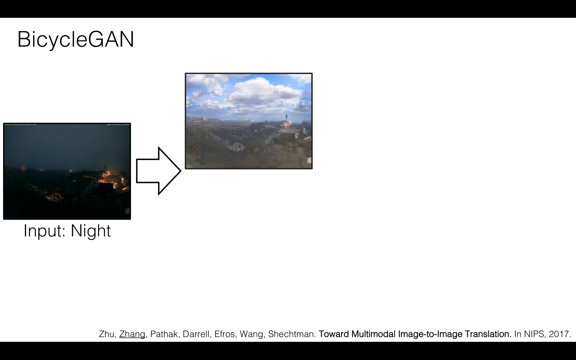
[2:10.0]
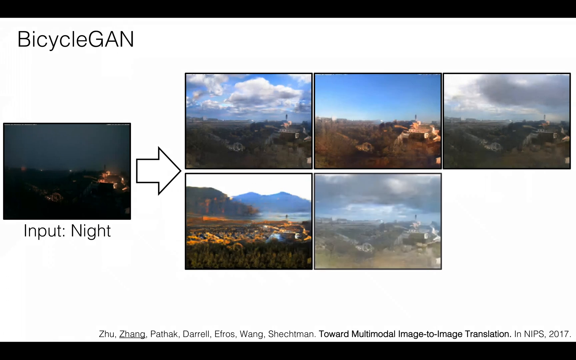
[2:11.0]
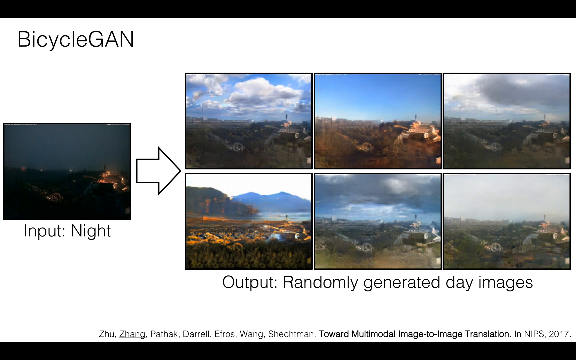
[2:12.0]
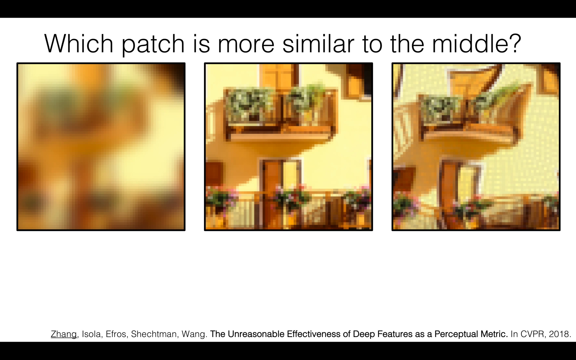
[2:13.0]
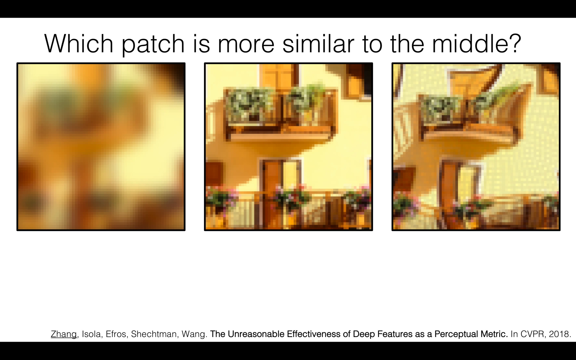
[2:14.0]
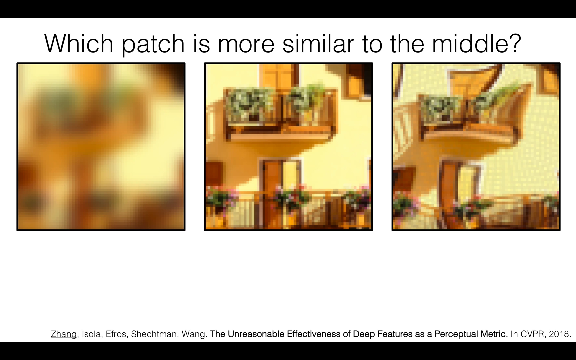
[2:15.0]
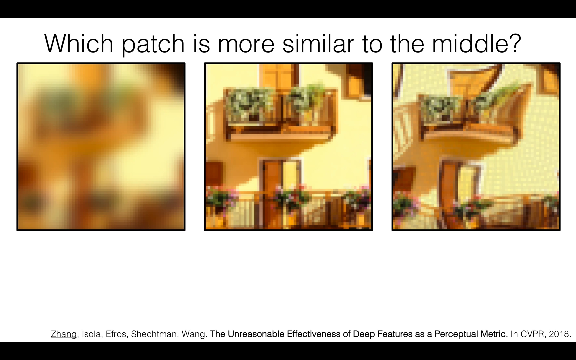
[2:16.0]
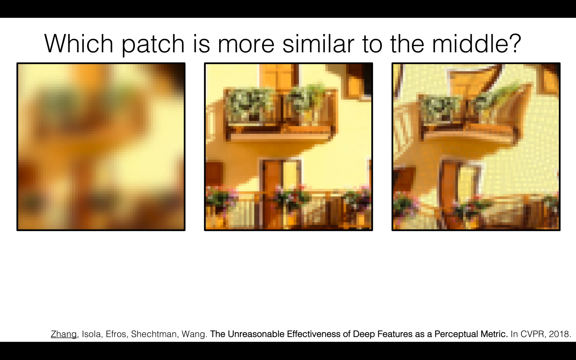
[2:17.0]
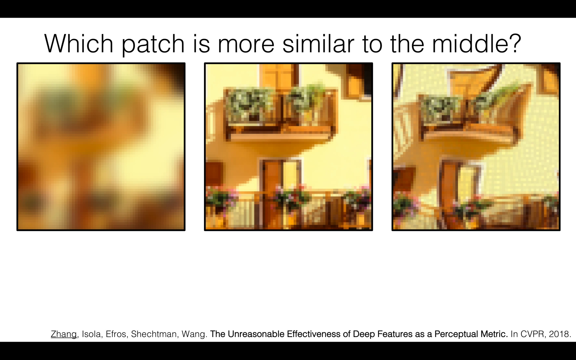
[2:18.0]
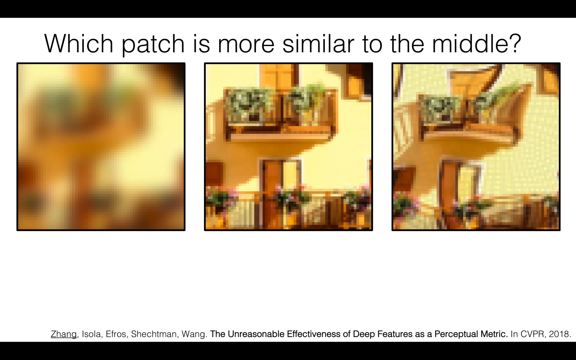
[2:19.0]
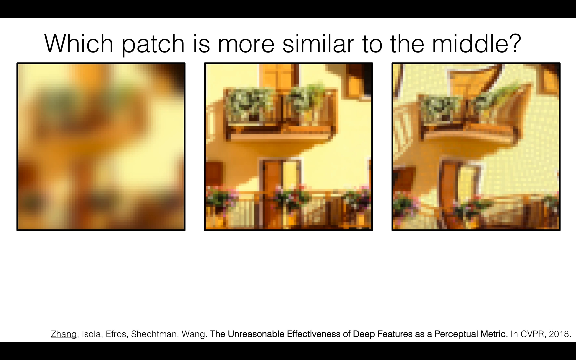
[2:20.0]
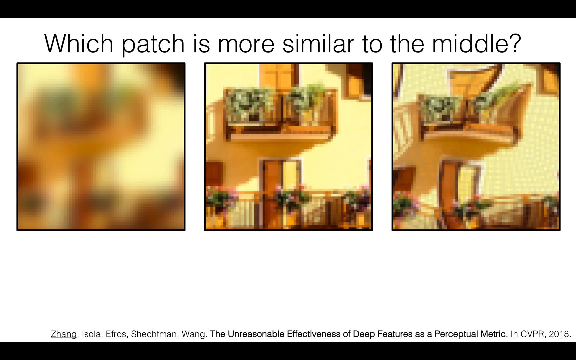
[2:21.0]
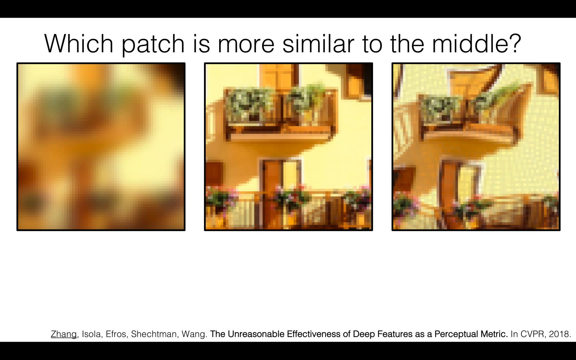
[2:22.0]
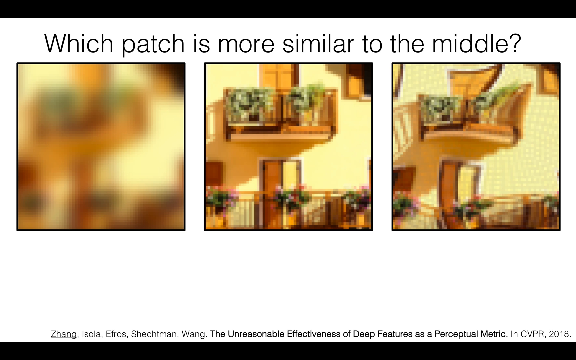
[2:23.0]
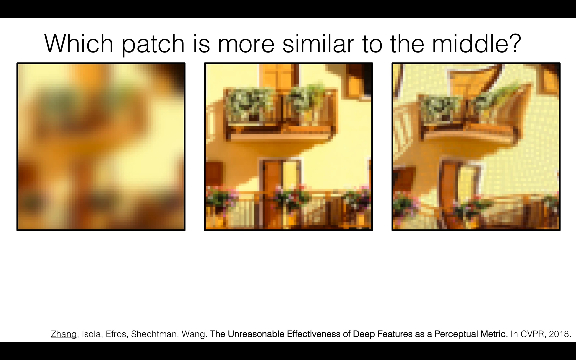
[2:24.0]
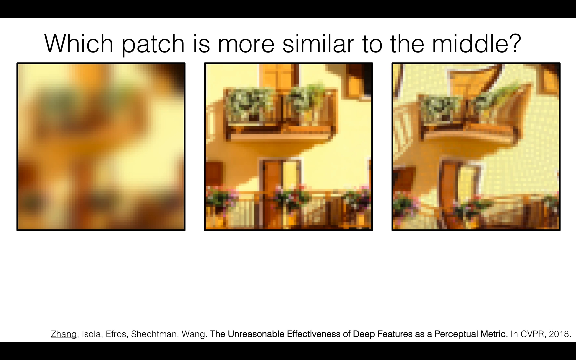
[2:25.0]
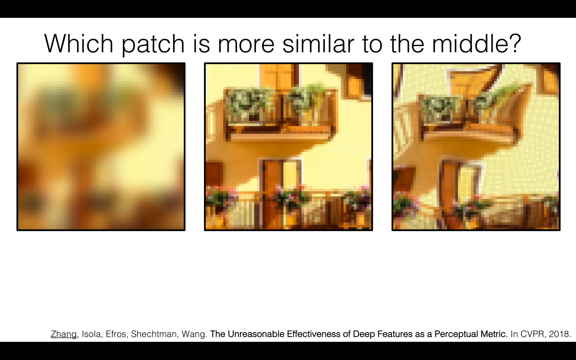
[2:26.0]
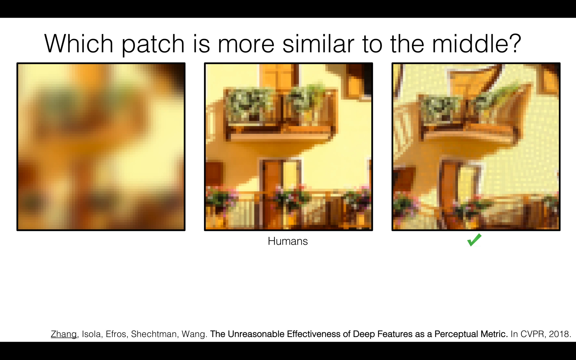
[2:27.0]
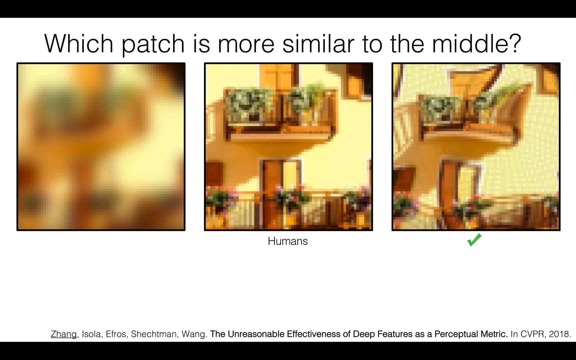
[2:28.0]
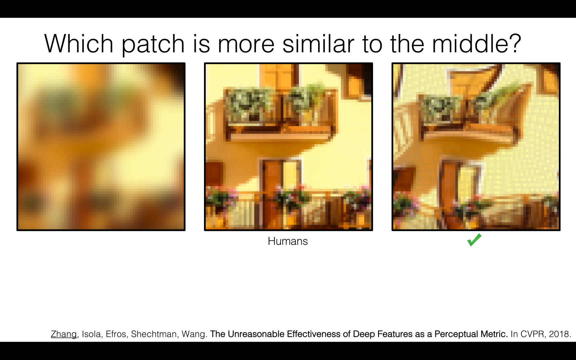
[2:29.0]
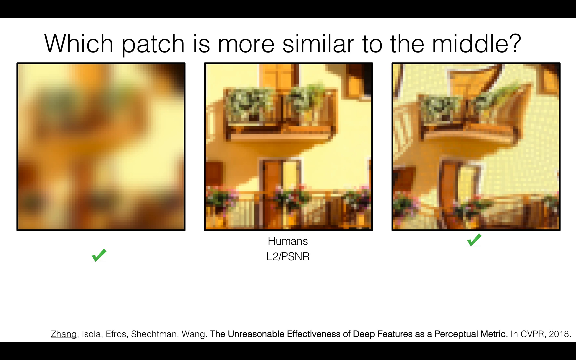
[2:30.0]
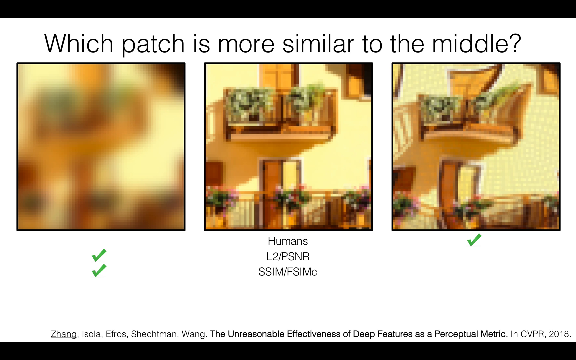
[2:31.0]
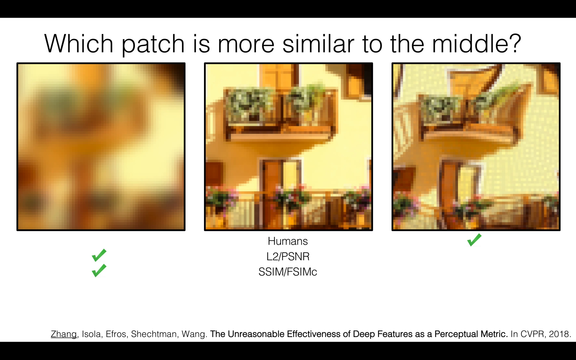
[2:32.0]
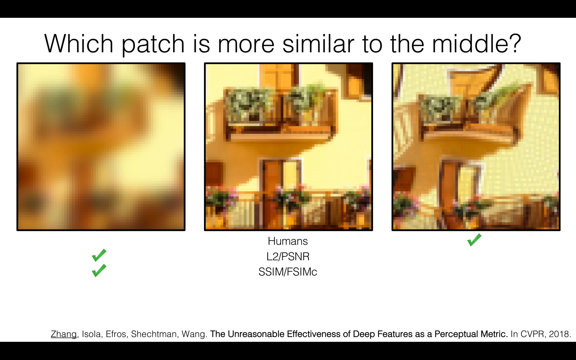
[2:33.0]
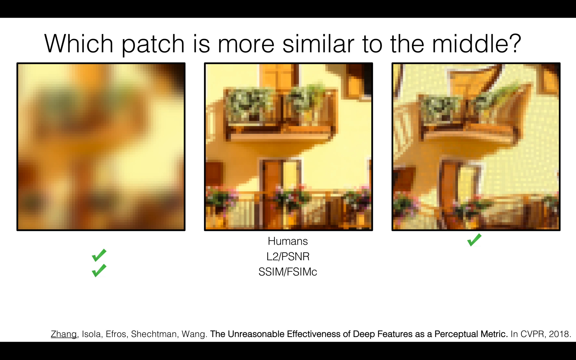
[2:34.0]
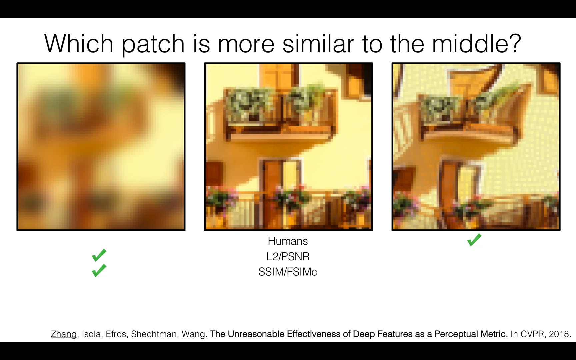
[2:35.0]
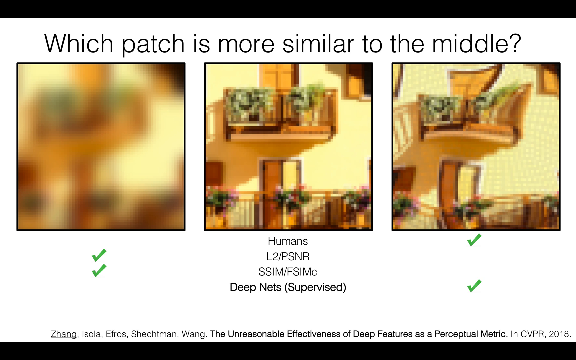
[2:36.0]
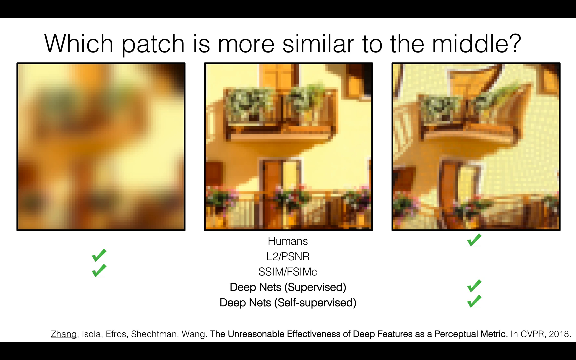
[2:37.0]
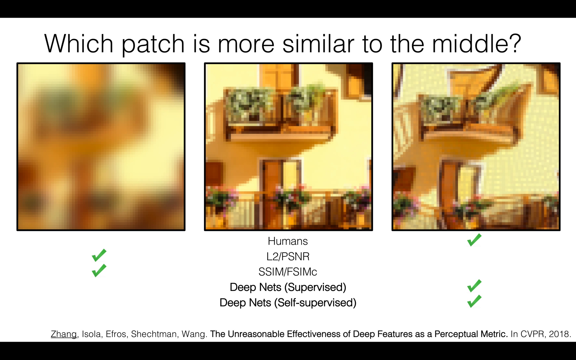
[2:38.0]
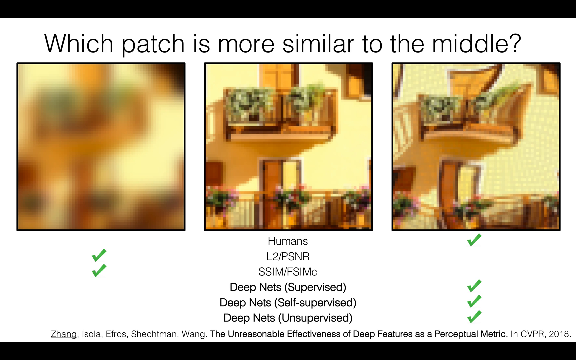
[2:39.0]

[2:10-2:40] On a blank white background, a small square box on the left reads "input night," and the words "bicycle GAN" are at the top left. To the right of the input night box, a white arrow points right, and six images appear. Below these six square images is the text "output randomly generated day images." Each image shows blue skies and sort of distorted-looking nature scenery. Next, three square boxes appear with the text "which patch is more similar to the middle" above them. The left box is very blurry, the right box is less blurry but kind of distorted, and the middle box is slightly blurry but the clearest of the three. The three images hold at first. Then the word "humans" appears under the middle box and a green check mark appears under the slightly distorted right box. The very blurry left box also starts to get green check marks to its left. Beneath the "humans" text appear "L2," "PSNR," and below that "SSIM" and "FSIMC."